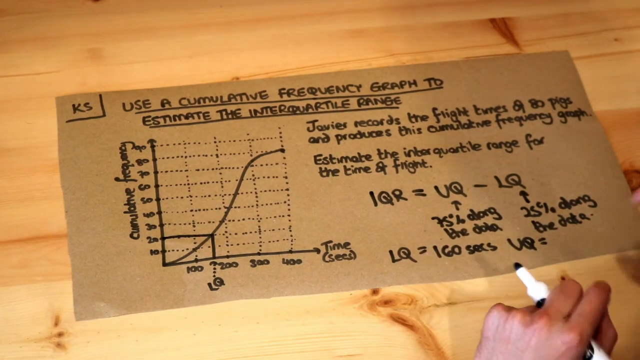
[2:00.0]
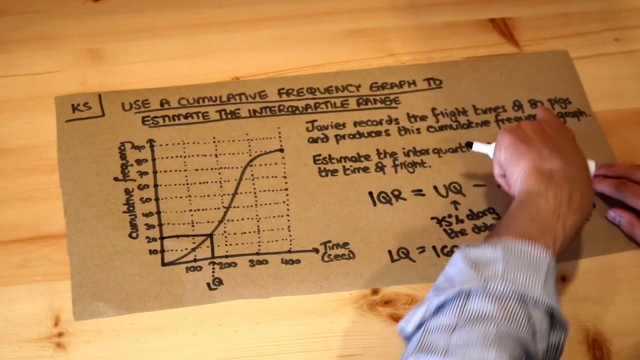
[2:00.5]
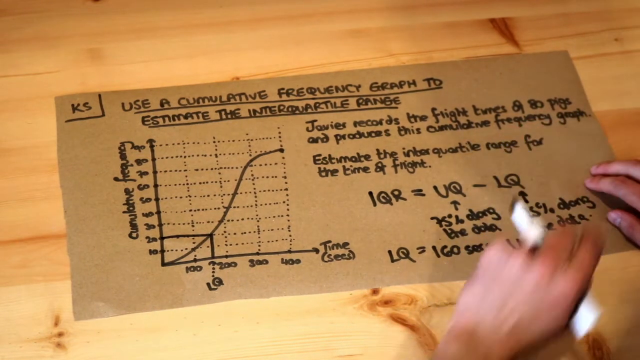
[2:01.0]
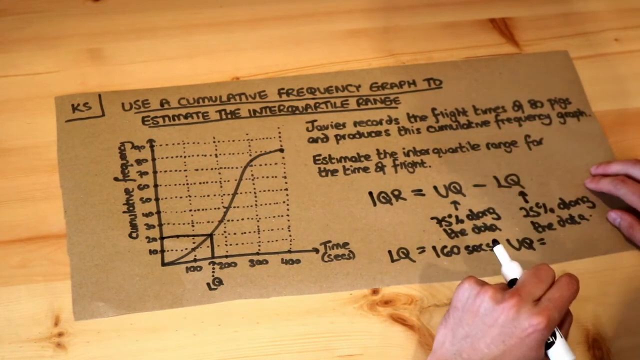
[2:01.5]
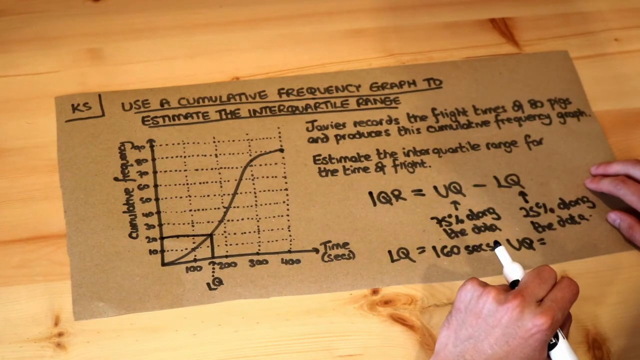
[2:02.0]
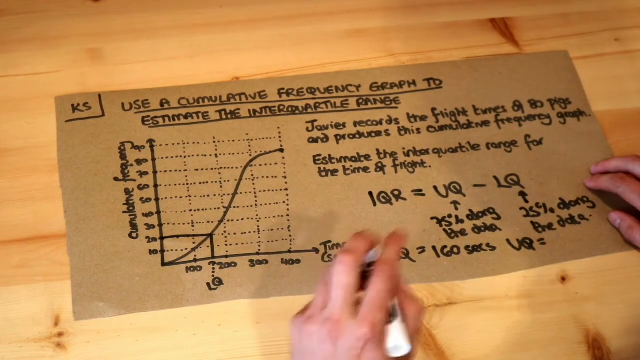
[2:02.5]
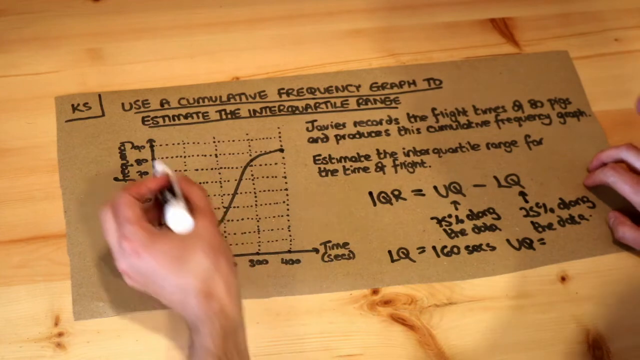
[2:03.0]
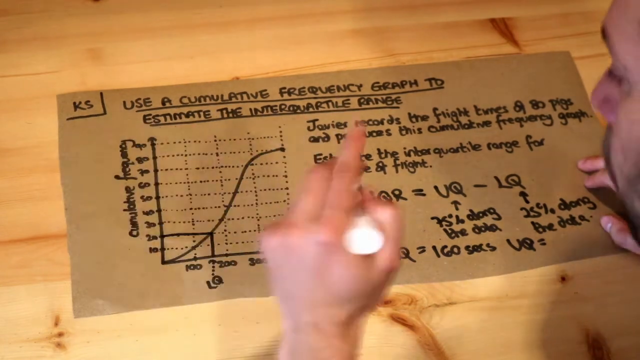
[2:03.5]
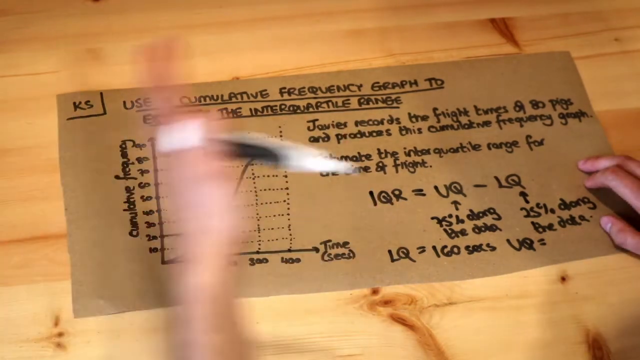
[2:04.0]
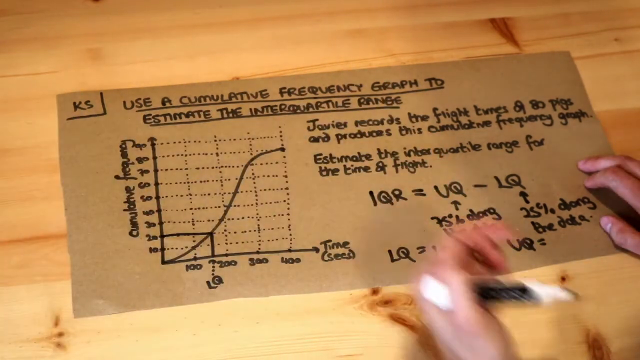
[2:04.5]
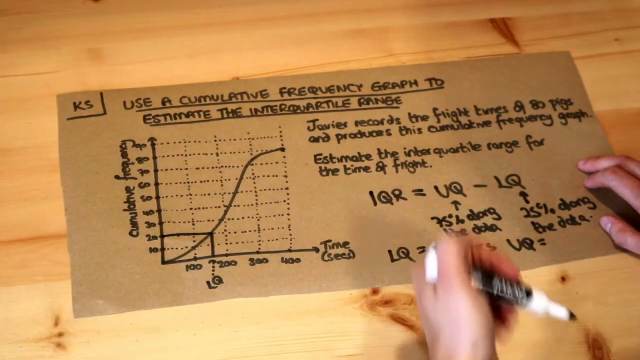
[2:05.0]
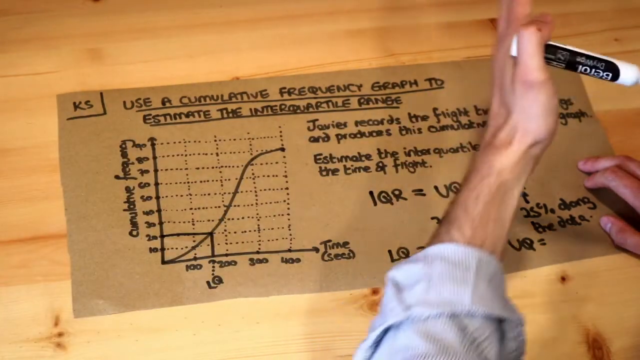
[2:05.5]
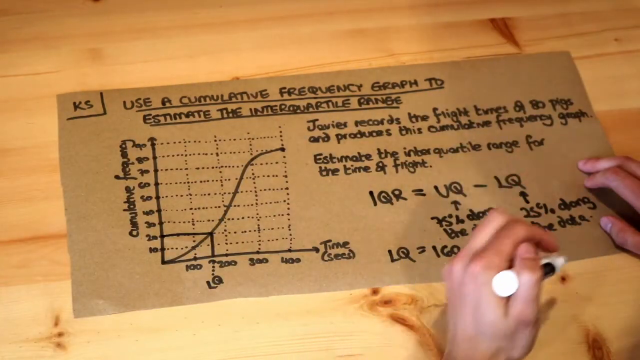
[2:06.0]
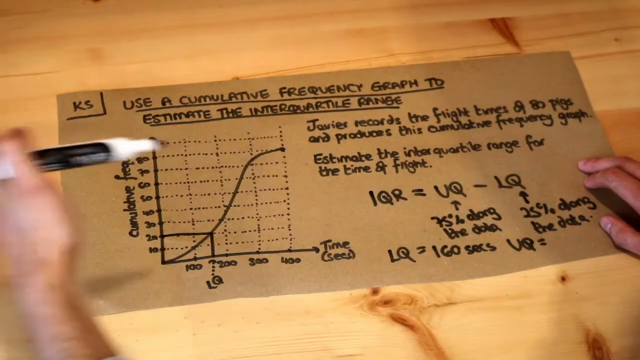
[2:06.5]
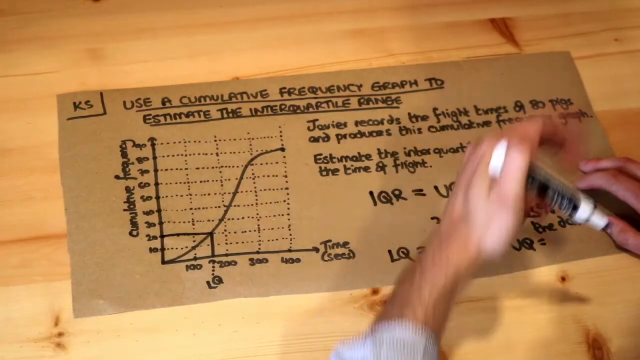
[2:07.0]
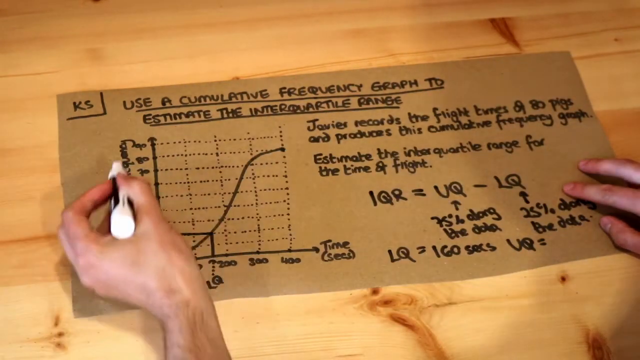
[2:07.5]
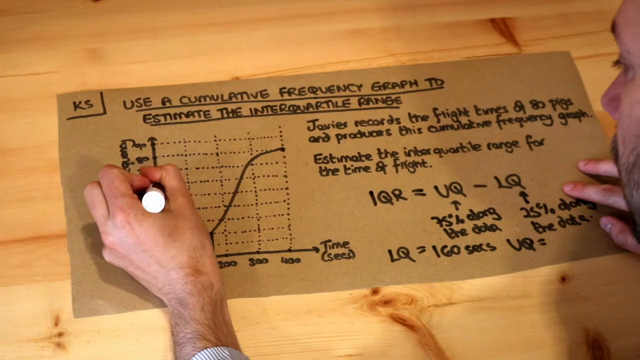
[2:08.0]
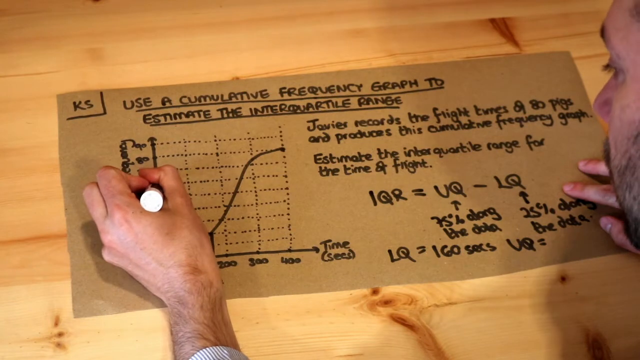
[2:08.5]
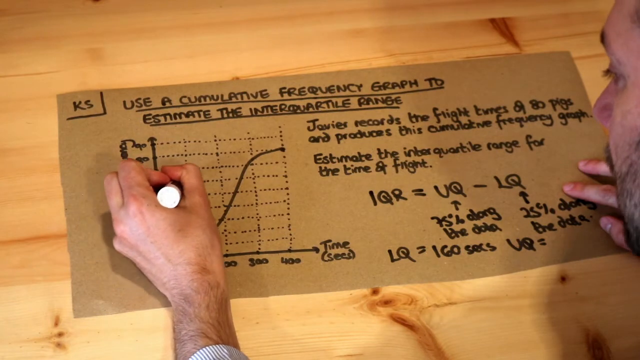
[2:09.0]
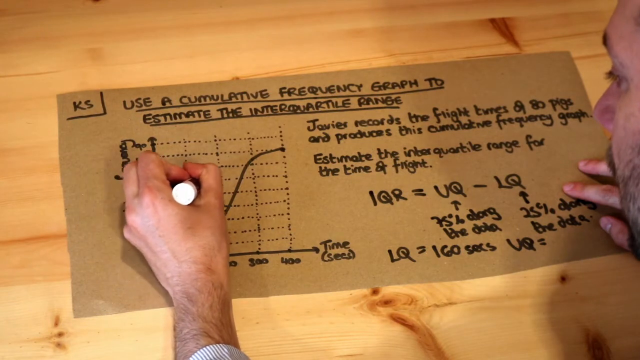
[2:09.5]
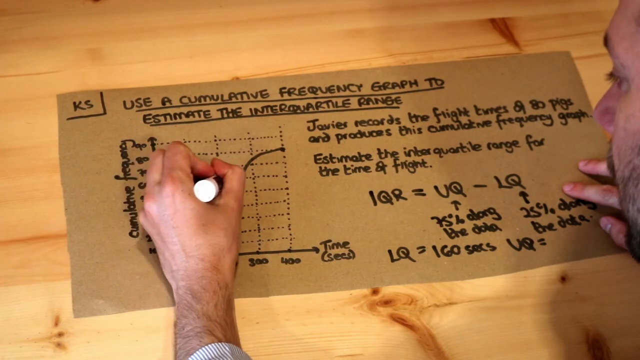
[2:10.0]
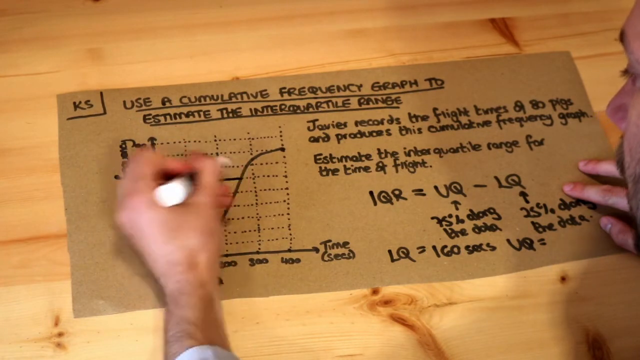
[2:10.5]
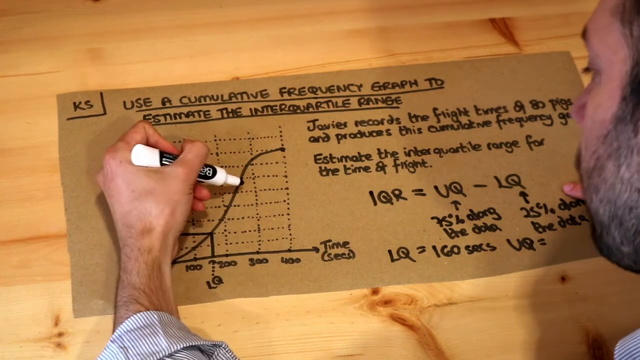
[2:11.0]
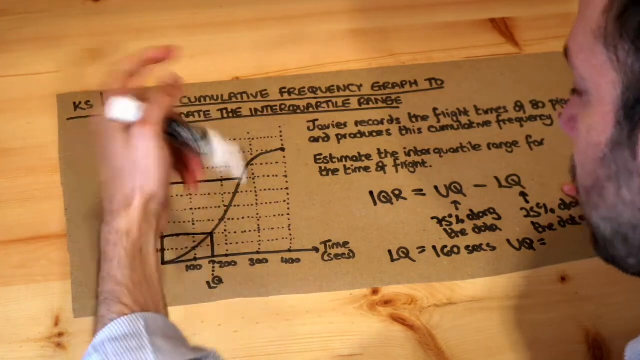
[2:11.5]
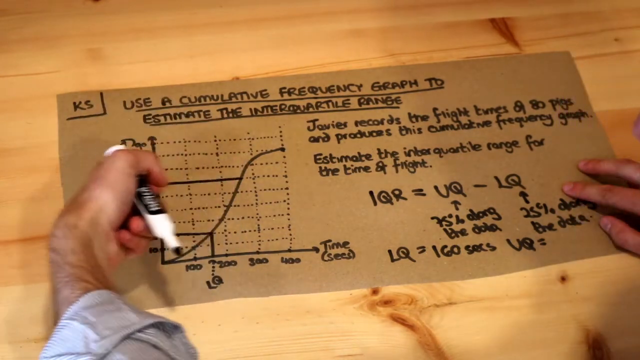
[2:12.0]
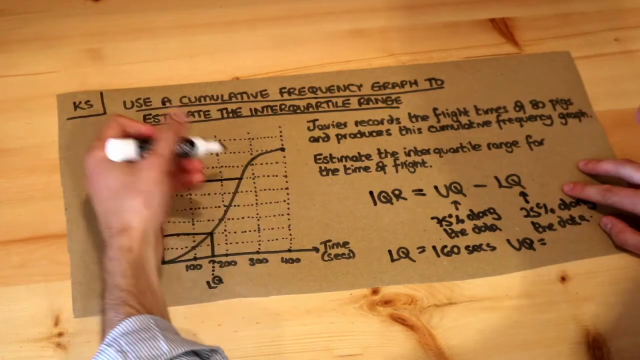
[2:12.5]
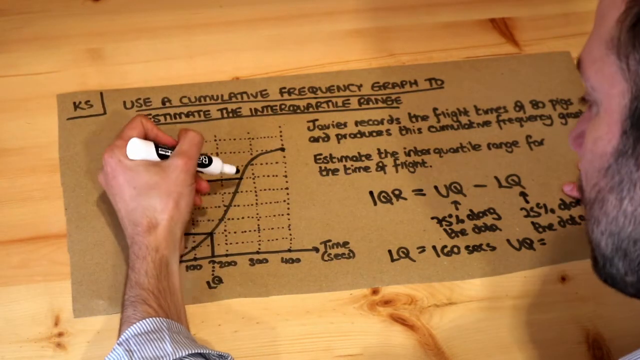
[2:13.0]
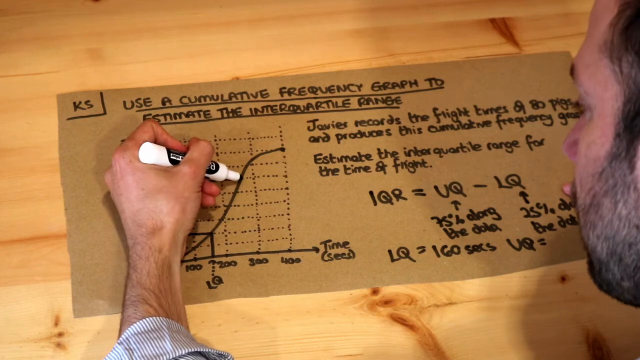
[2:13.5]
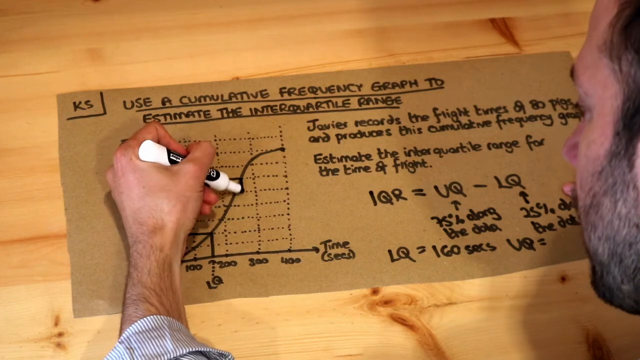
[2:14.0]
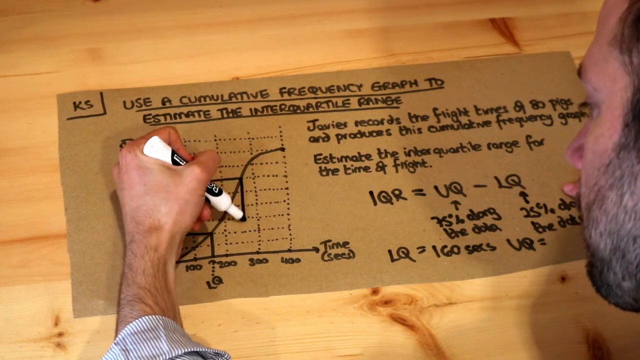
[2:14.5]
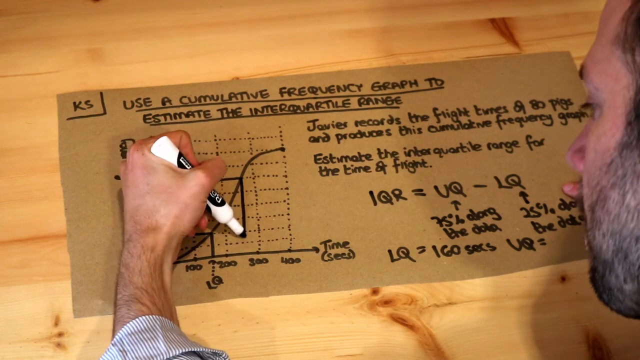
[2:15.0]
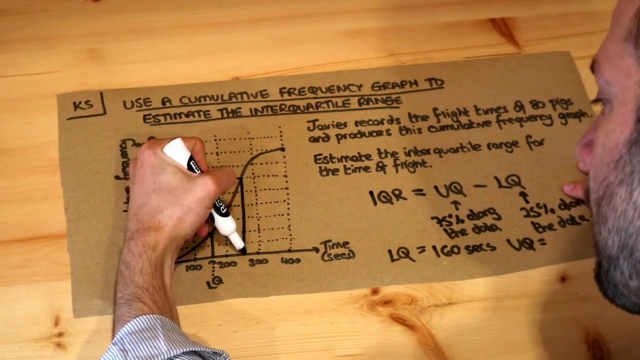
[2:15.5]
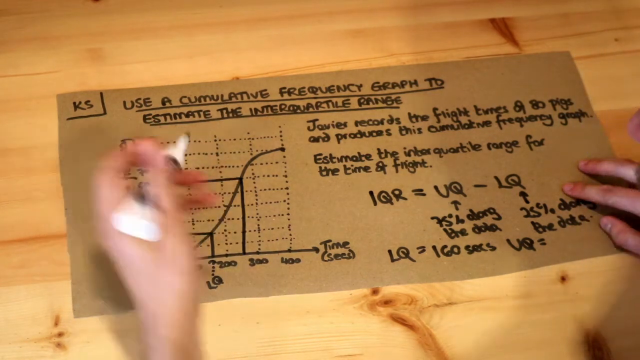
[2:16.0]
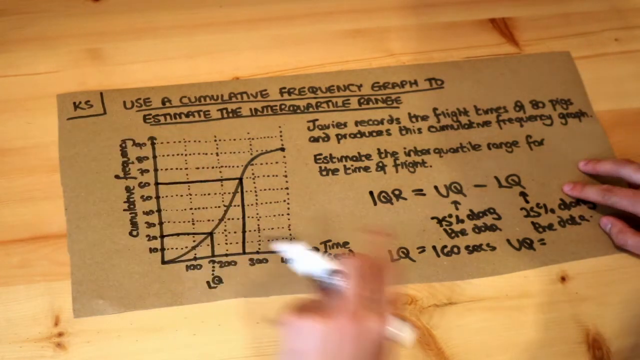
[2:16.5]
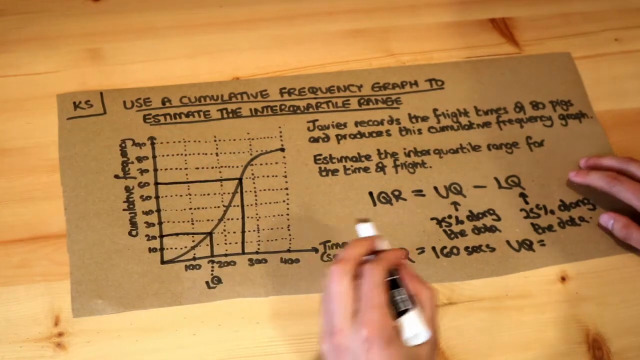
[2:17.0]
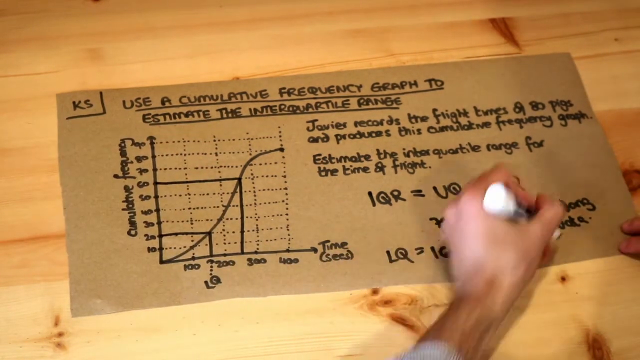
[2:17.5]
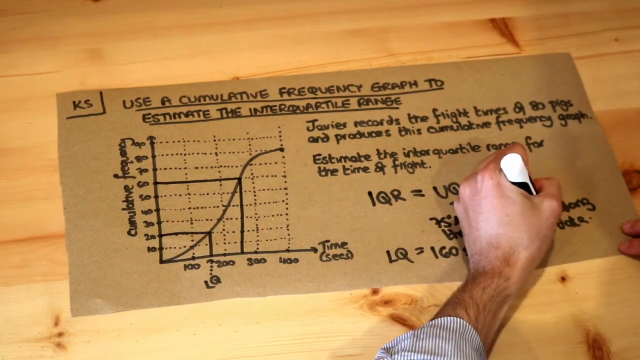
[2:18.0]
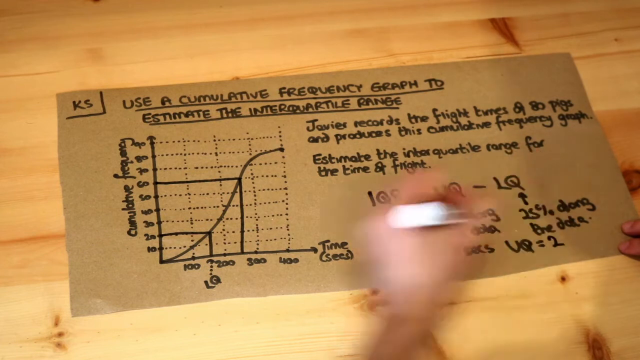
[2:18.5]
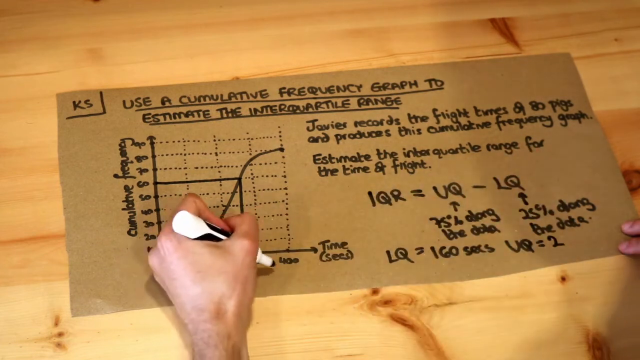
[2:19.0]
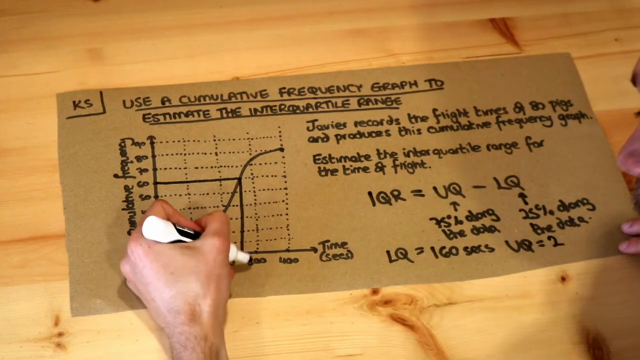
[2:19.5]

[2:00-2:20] A man is working on a cut-out piece of cardboard titled "use a cumulative frequency graph to estimate the interquartile range." The bottom of the graph is time and the side is cumulative frequency. He has written two sentences and equations: "1qr equals uq minus lq," with arrows and a little information about the two components, and "lq equals 160" followed by what looks like "secs." The last equation is unfinished. He leans in so his appearance is visible; only the left side of his face is seen. He is left-handed, holding the marker in his left hand and holding down the cardboard with his right hand. He has drawn a box in the innermost part on the left side of the graph and now draws a larger box higher up on the graph and further out. The cardboard is on a light-coloured wooden surface showing natural grains and knots.